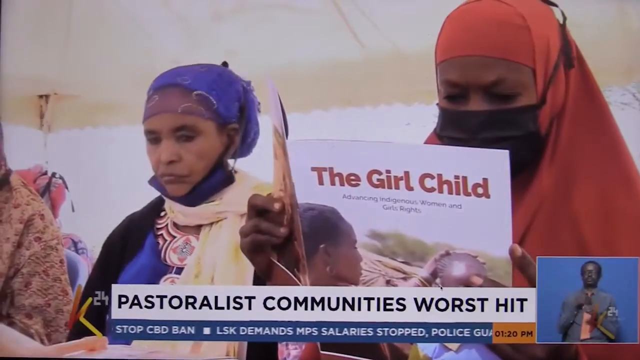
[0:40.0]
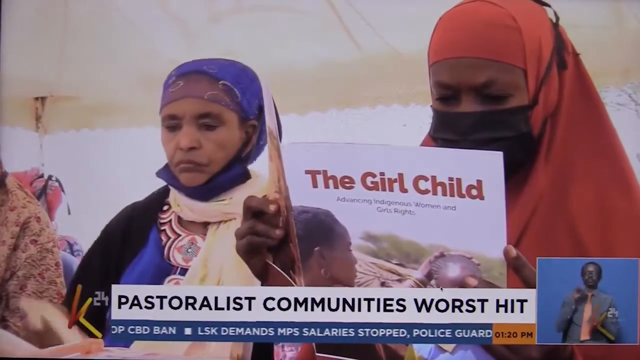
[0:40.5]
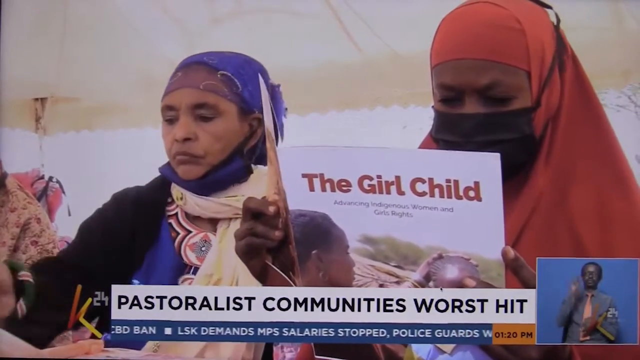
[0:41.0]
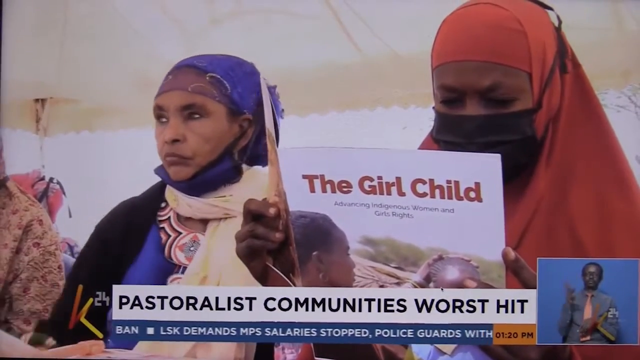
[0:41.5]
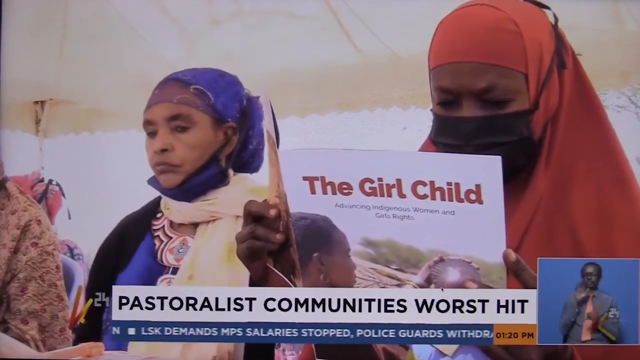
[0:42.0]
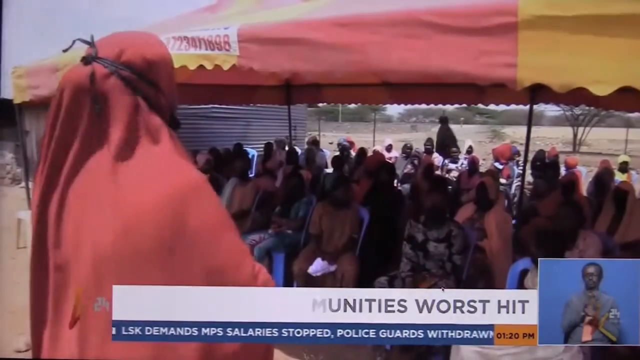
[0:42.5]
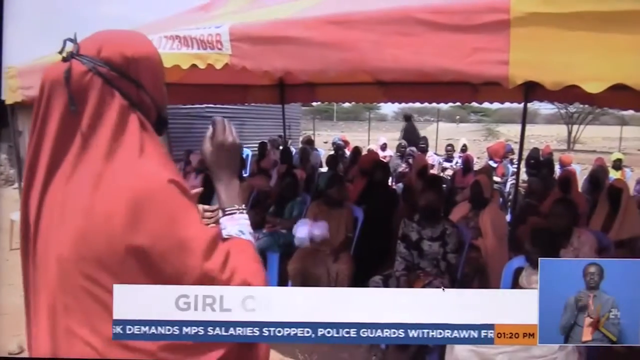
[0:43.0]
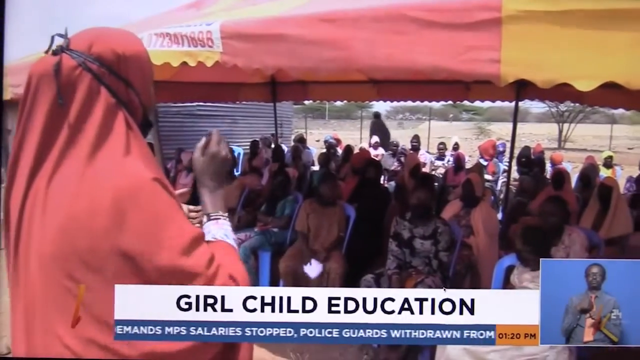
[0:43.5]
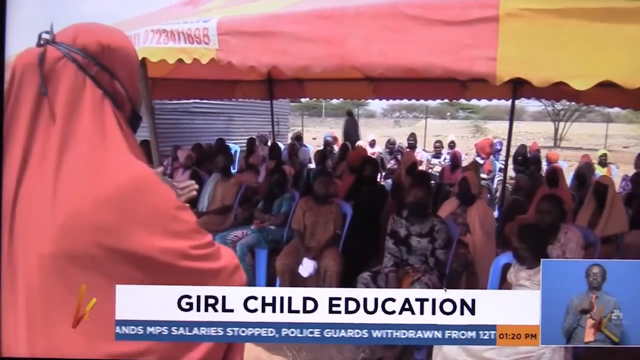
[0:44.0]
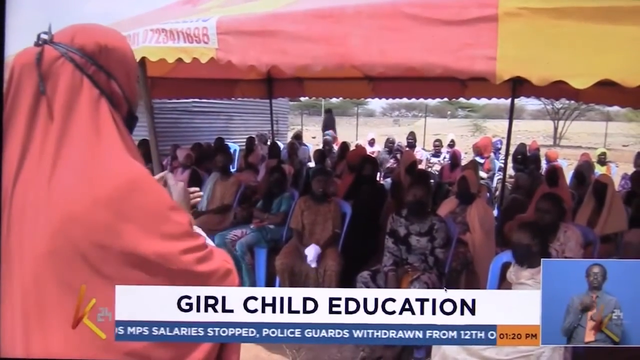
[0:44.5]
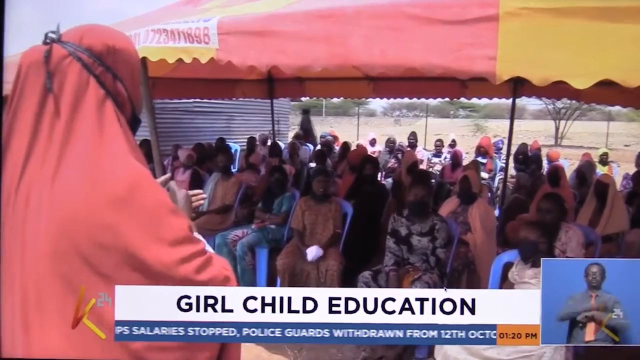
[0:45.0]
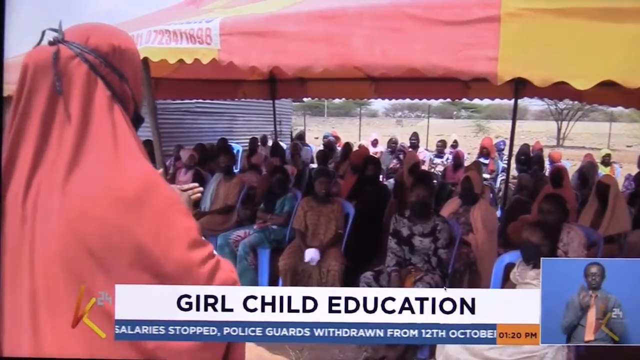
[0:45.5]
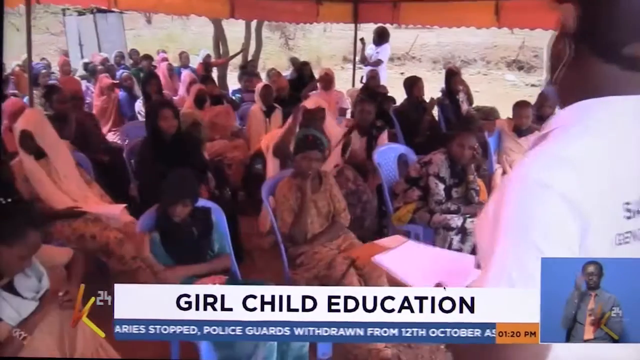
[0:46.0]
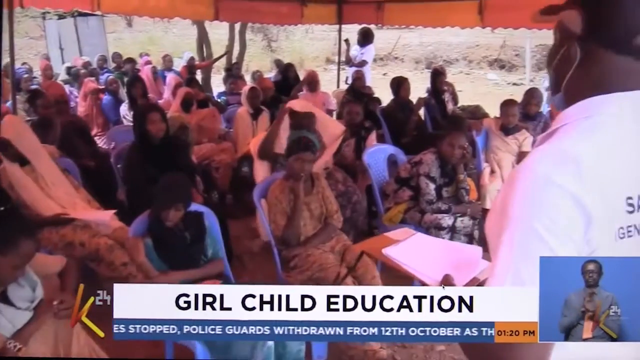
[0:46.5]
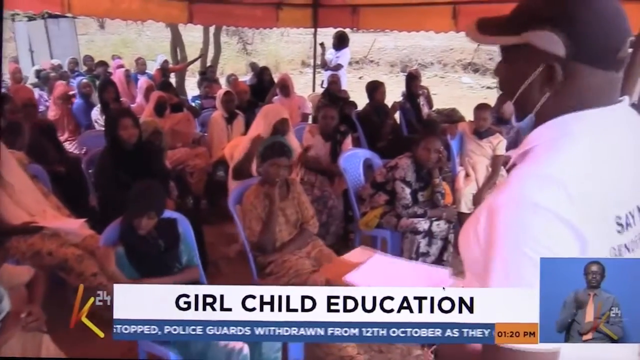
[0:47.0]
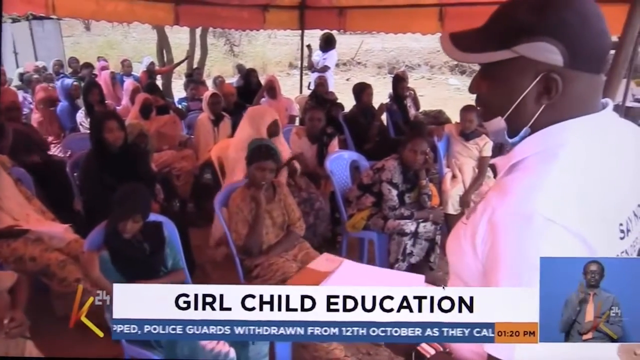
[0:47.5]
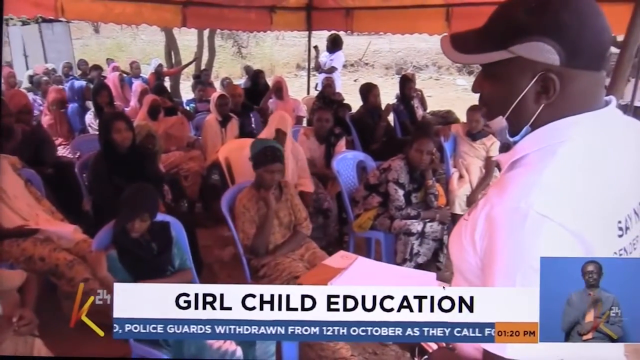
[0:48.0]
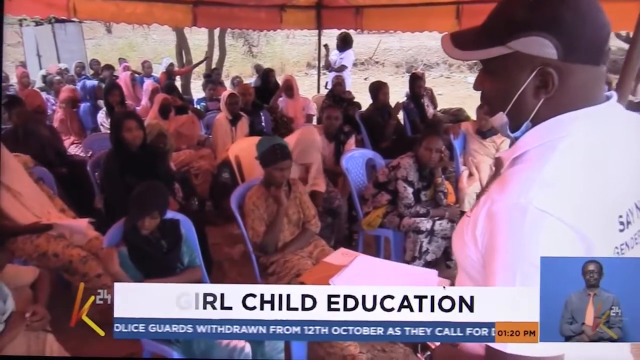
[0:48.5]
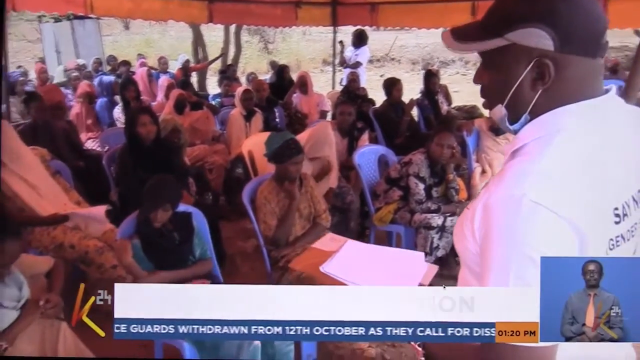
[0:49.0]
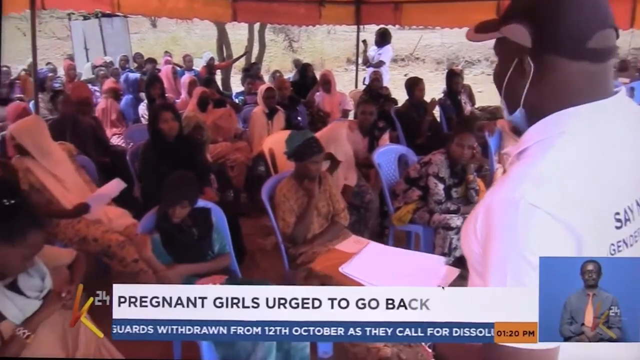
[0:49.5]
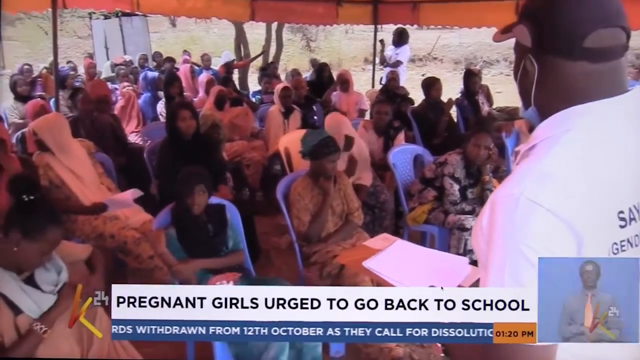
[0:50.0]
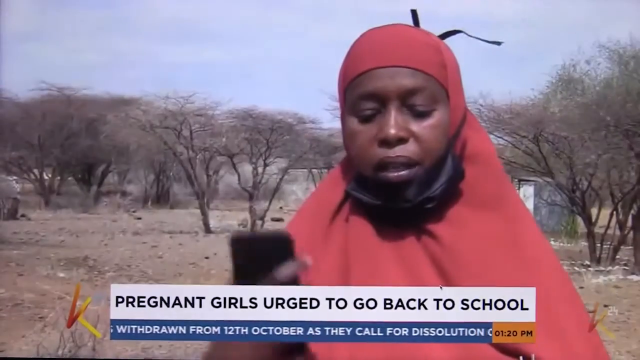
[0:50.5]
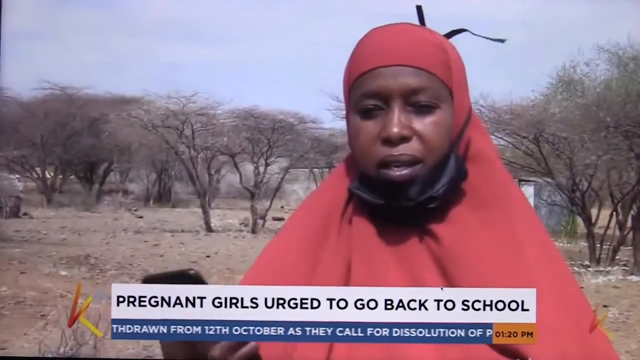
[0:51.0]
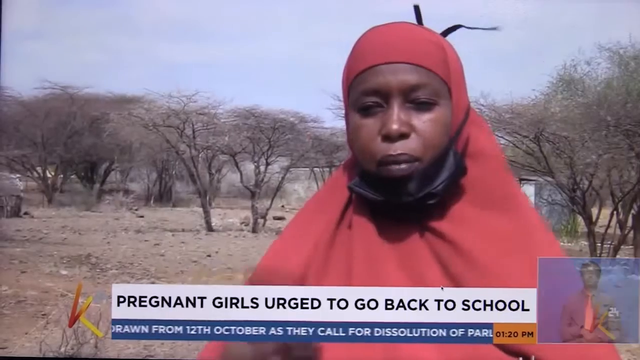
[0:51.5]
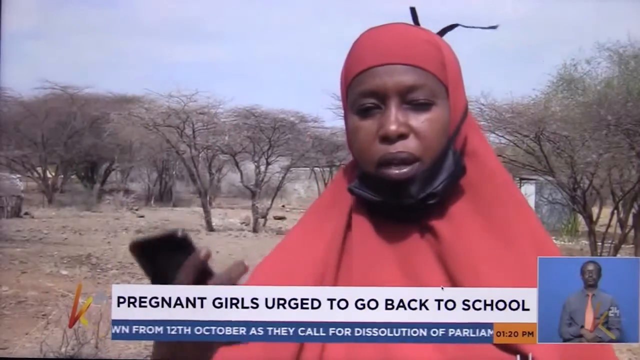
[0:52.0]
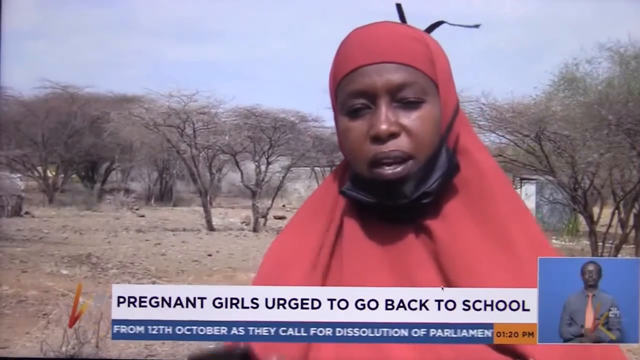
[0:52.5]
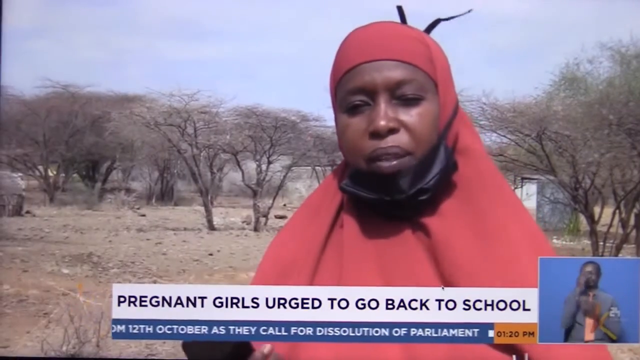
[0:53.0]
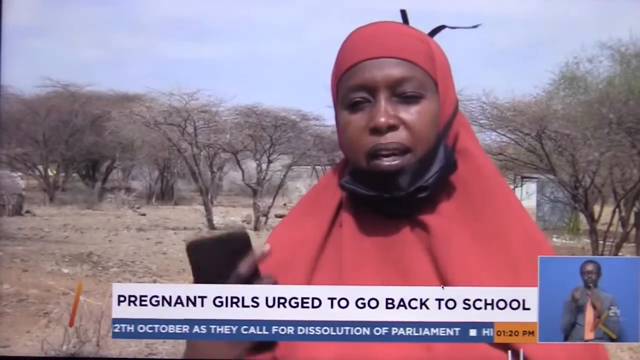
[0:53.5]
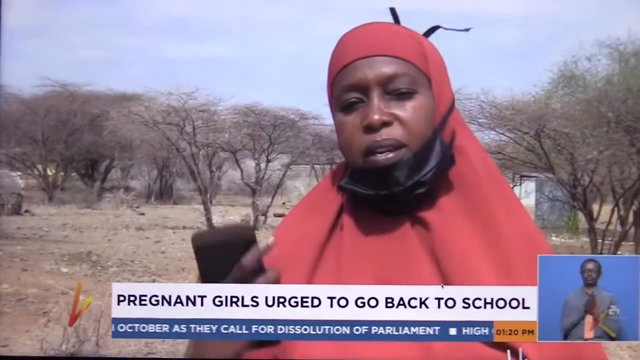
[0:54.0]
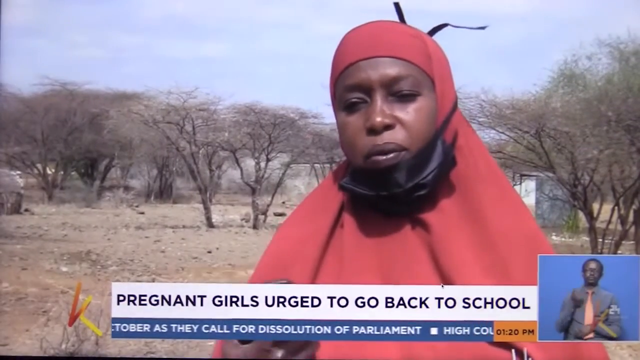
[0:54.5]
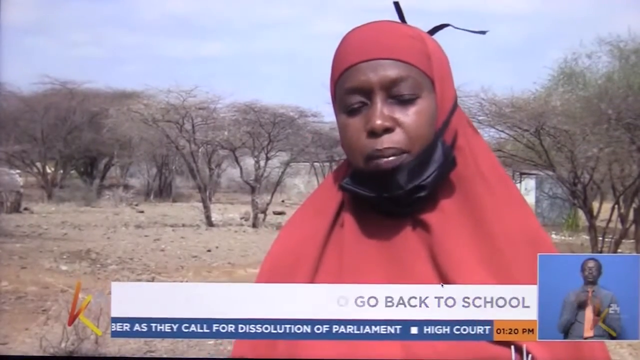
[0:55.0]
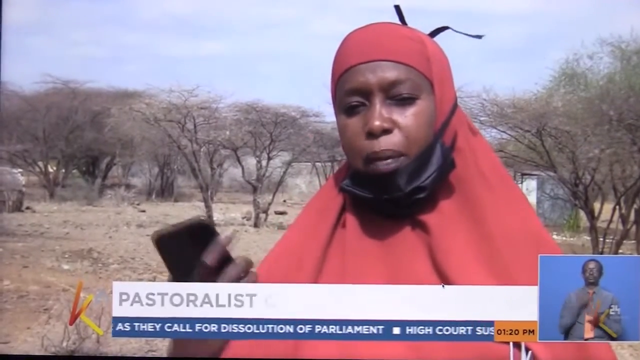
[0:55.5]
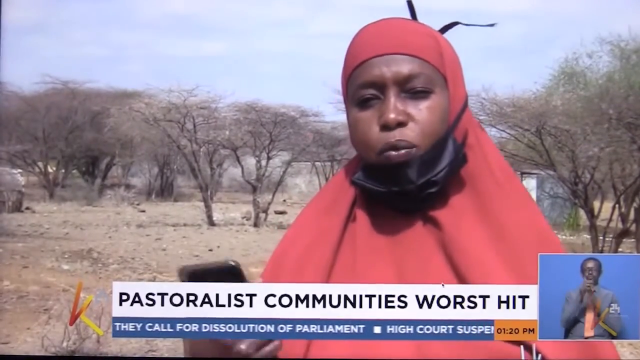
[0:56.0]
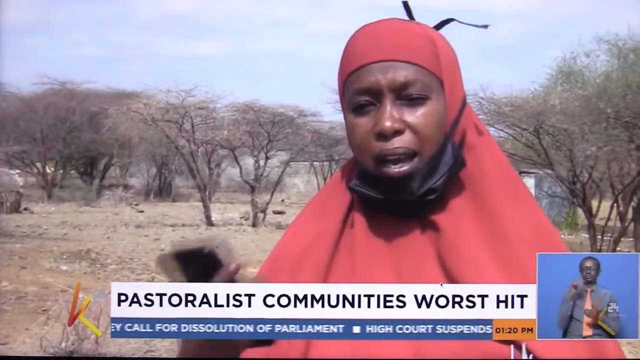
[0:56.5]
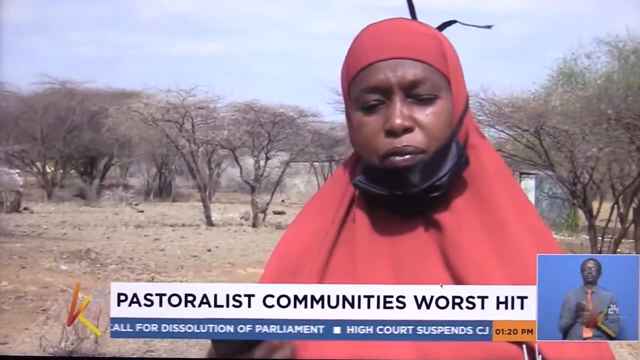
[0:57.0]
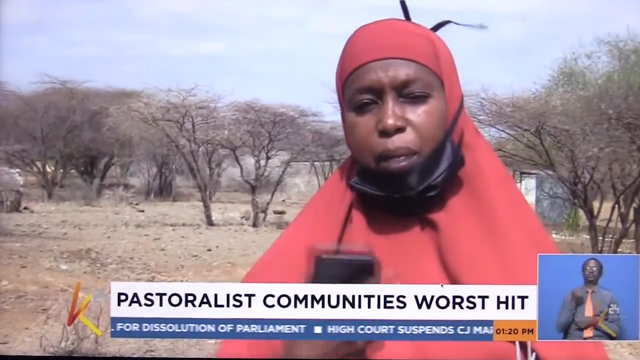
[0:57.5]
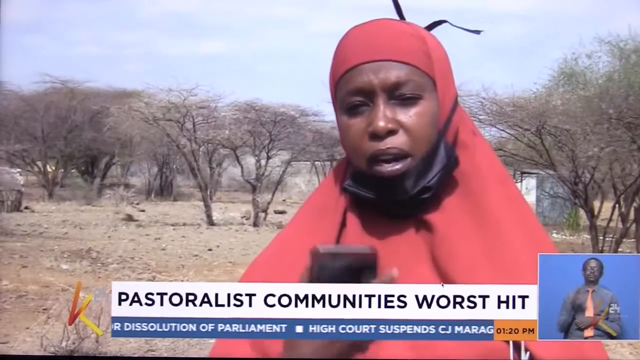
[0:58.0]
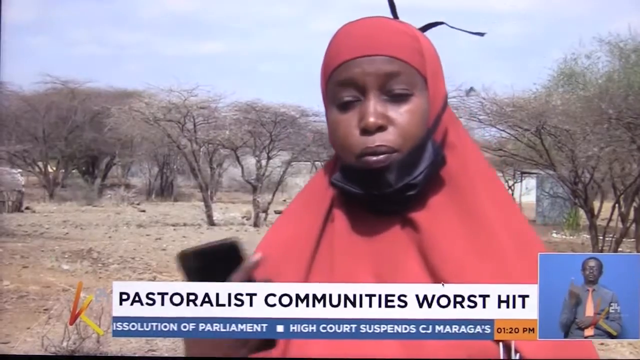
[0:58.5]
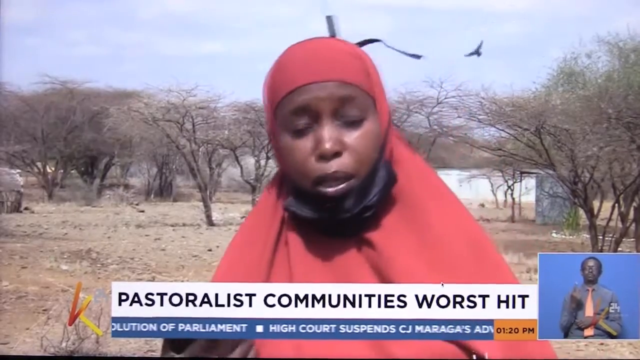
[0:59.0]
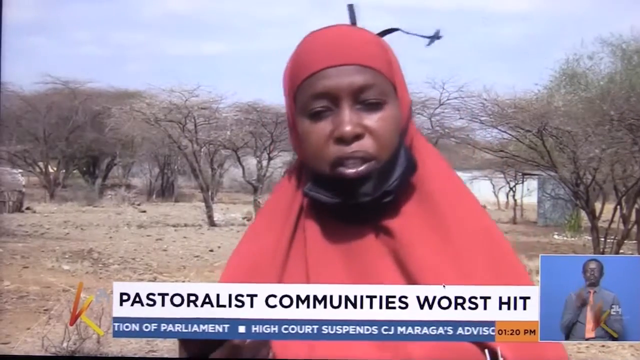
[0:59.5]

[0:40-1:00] The news broadcast appears to be from Africa. In a rectangle in the bottom right of the screen, separate from the main video, a man with a blue background gives sign language; he has dark skin, wears a grey long-sleeve shirt and an orange or pink tie, and has no glasses. The main video features a group of women reading a book or brochure called "The Girl Child", written in English. The woman on the right wears a red headdress and a Covid mask, and a woman to the left wears mostly blue with a bit of black and a bit of yellow. The words "girl education" appear in black font at the bottom of the screen, along with "pregnant girls being urged to go back to school". The woman in the red headdress is seen speaking to the camera, holding her phone in her right hand. In the background a black bird, possibly a crow, is flying.